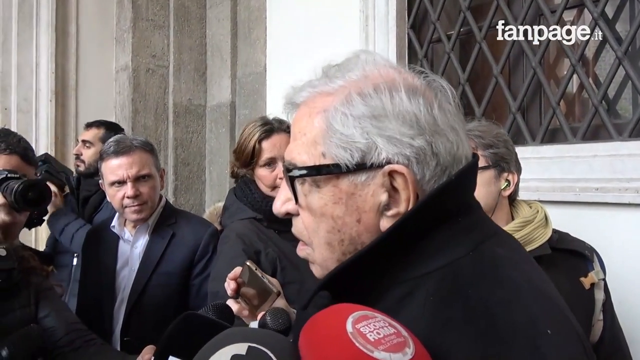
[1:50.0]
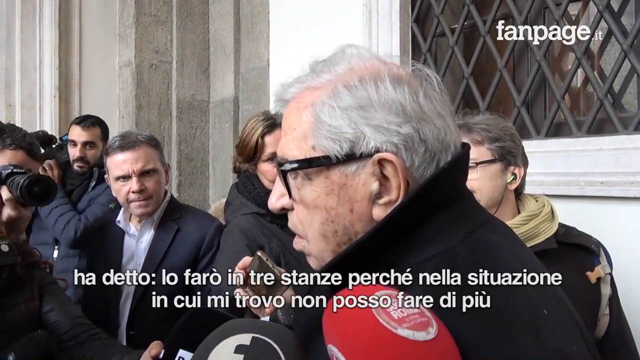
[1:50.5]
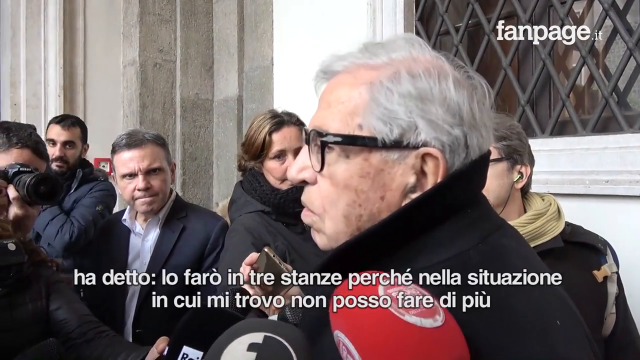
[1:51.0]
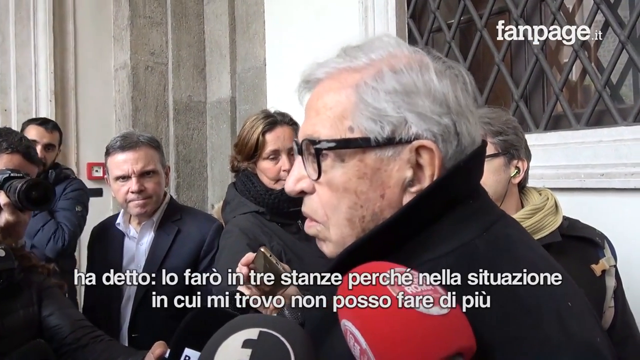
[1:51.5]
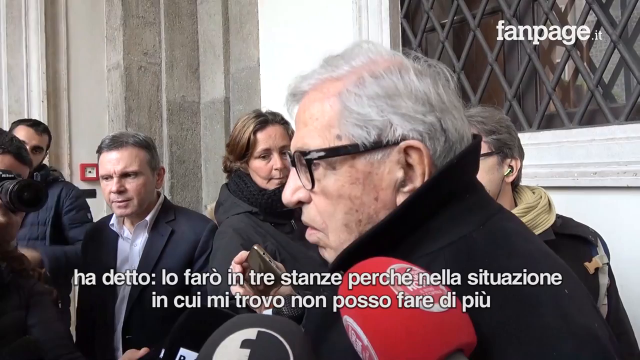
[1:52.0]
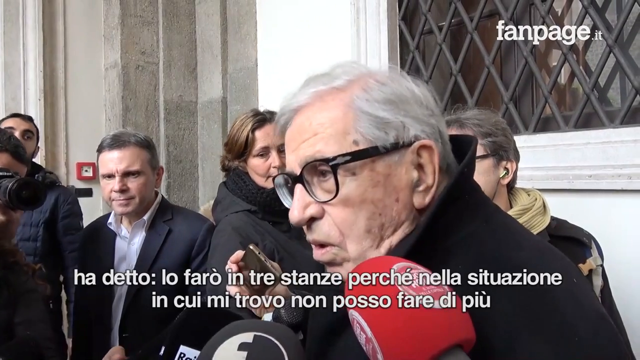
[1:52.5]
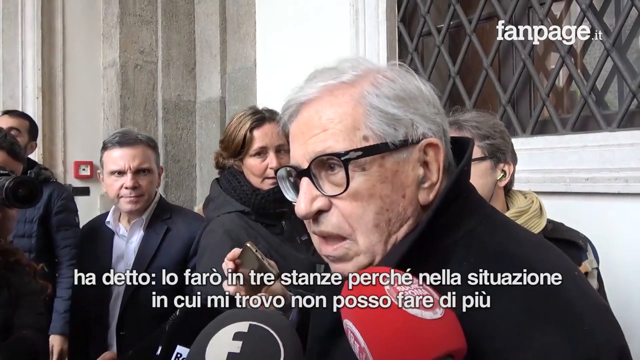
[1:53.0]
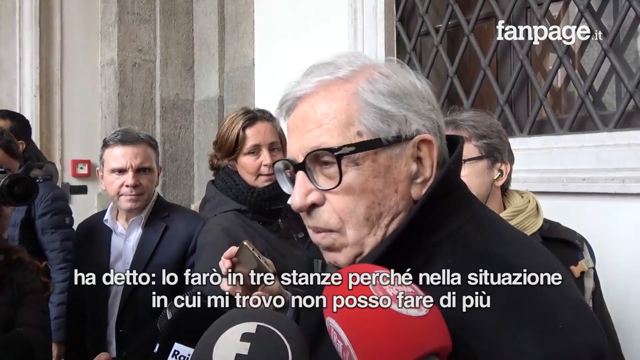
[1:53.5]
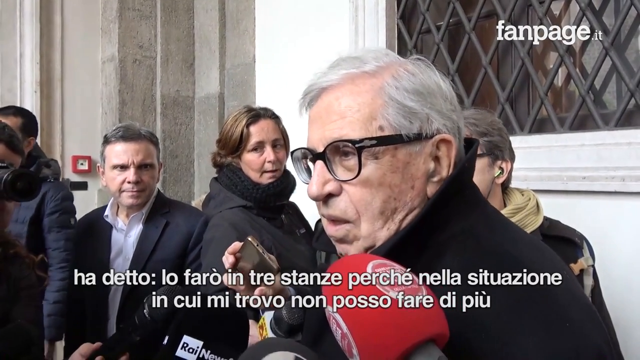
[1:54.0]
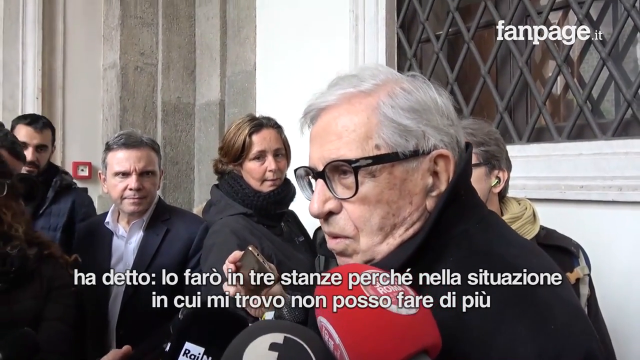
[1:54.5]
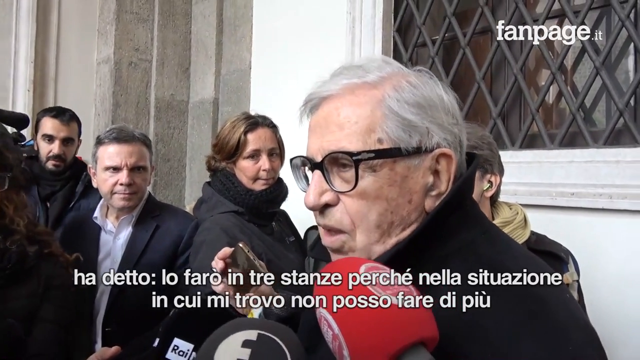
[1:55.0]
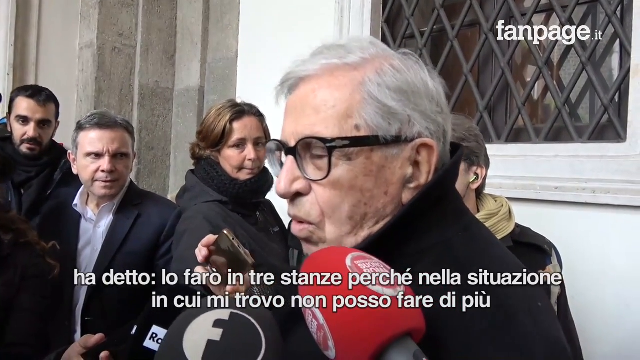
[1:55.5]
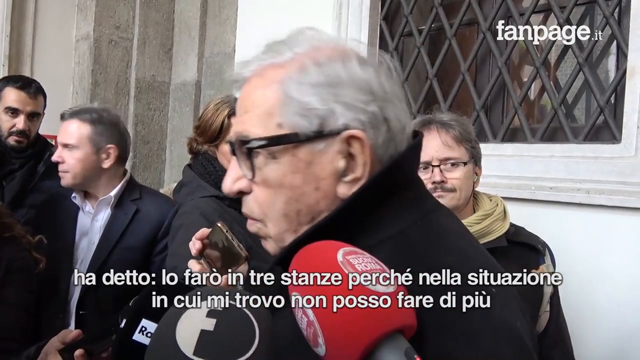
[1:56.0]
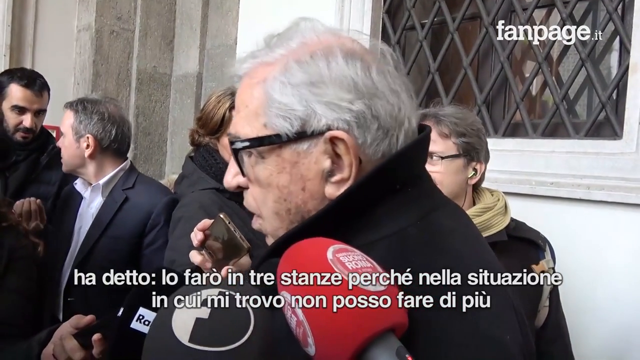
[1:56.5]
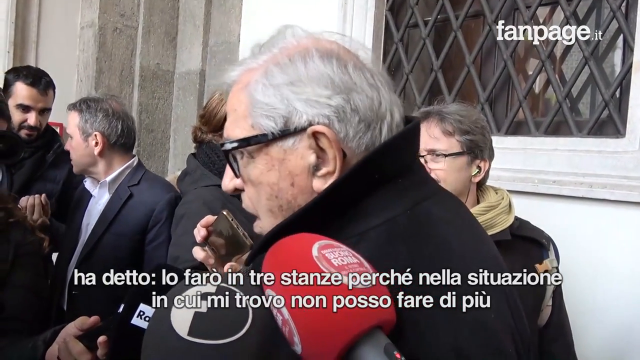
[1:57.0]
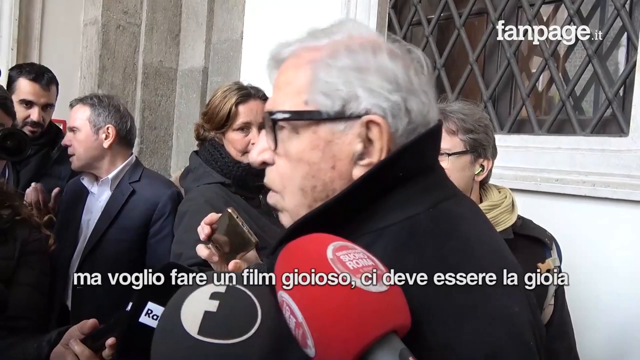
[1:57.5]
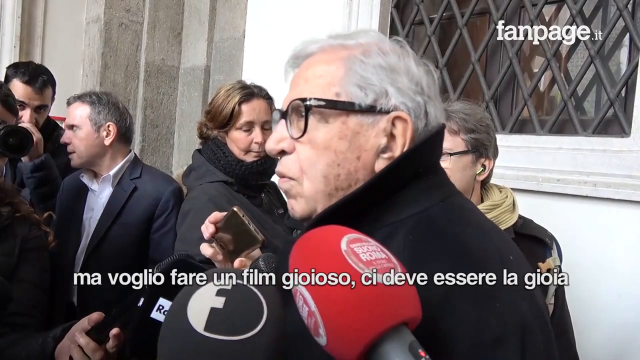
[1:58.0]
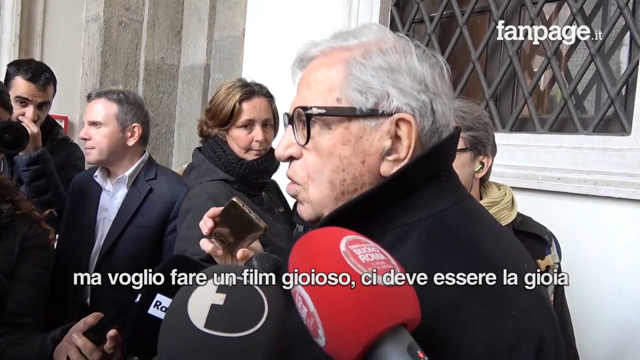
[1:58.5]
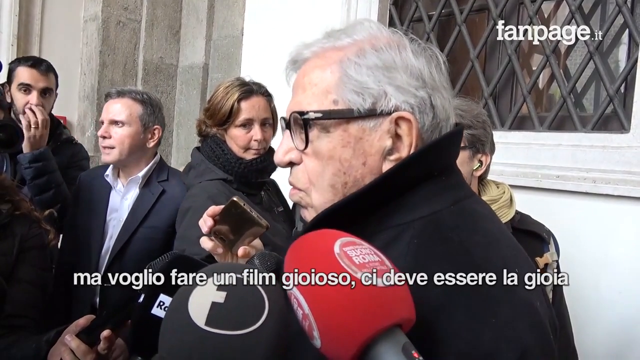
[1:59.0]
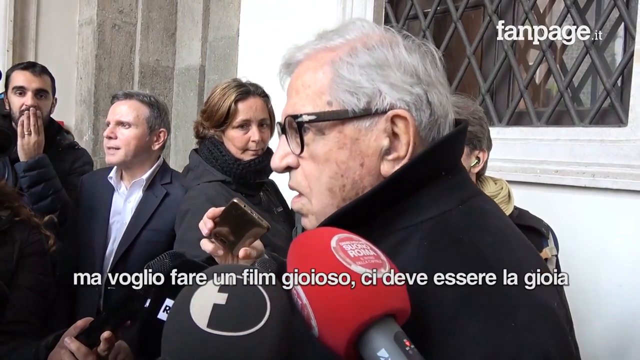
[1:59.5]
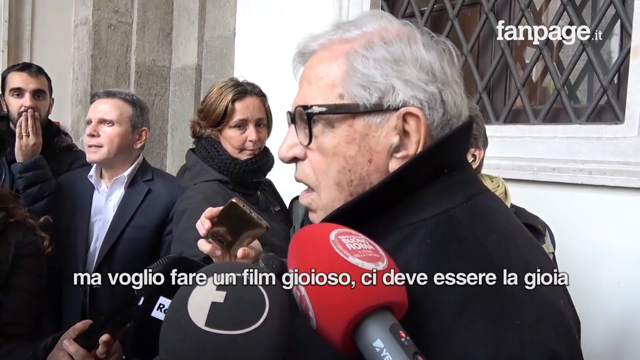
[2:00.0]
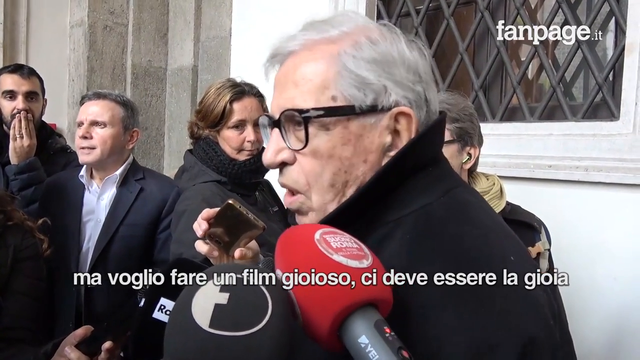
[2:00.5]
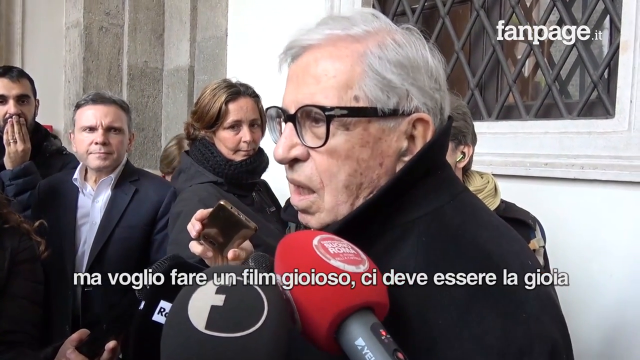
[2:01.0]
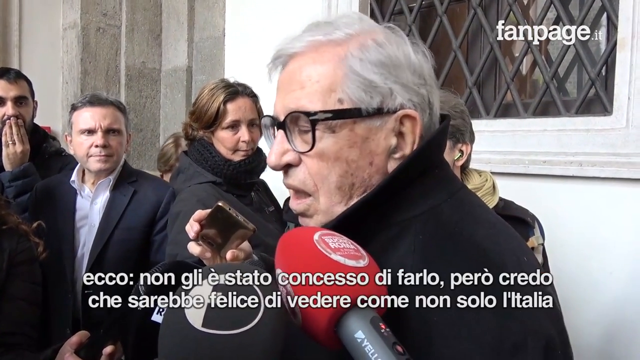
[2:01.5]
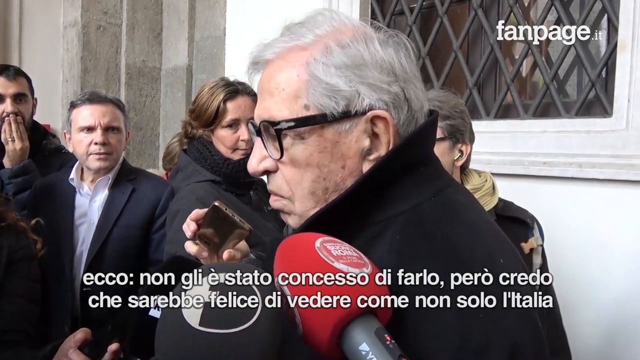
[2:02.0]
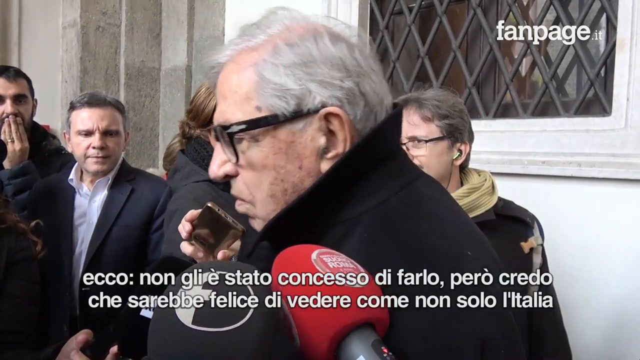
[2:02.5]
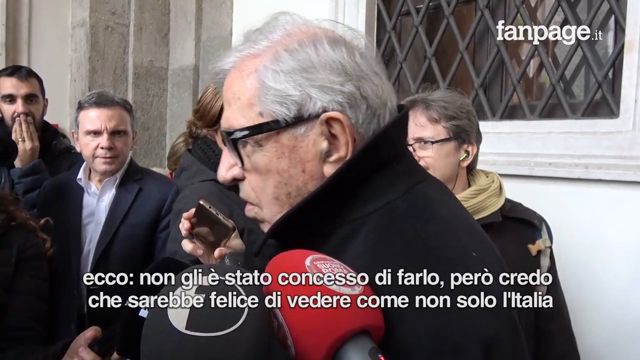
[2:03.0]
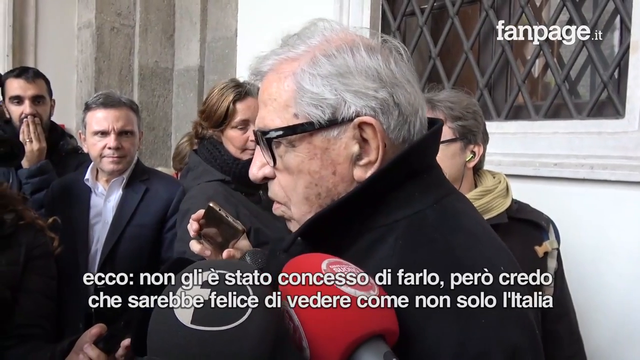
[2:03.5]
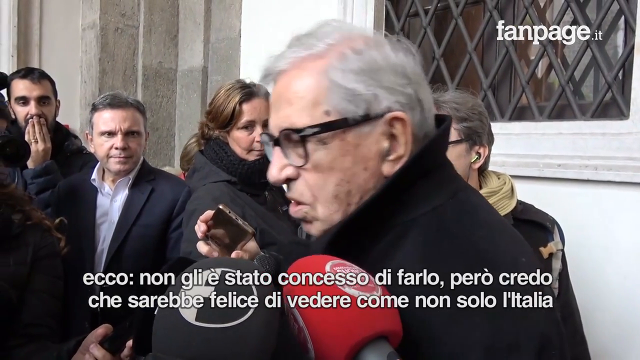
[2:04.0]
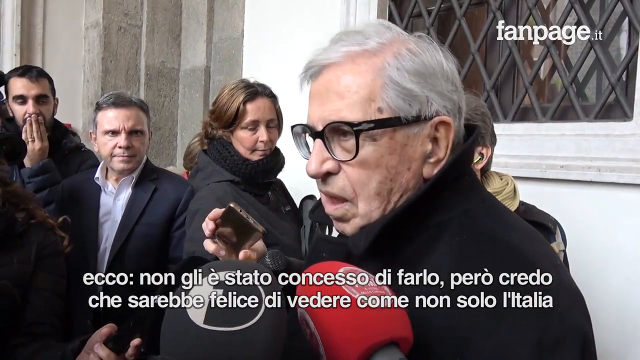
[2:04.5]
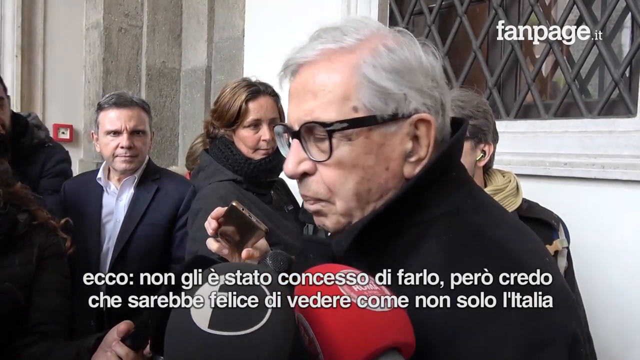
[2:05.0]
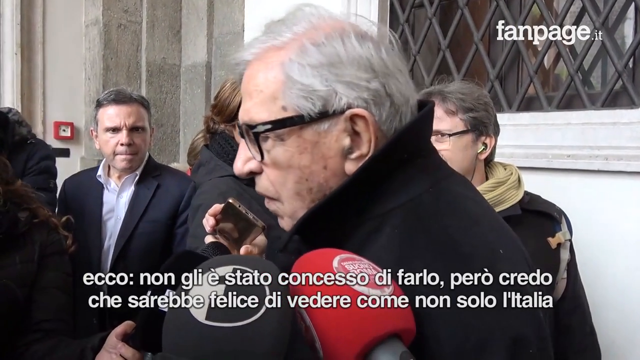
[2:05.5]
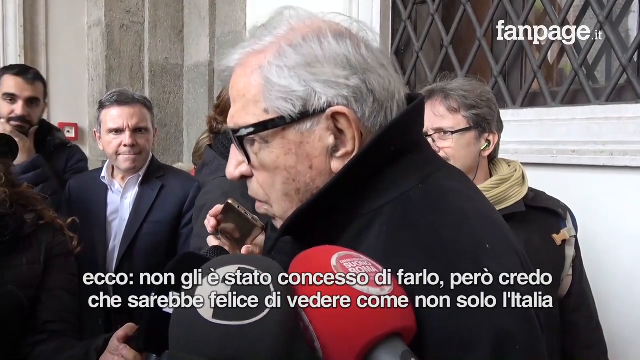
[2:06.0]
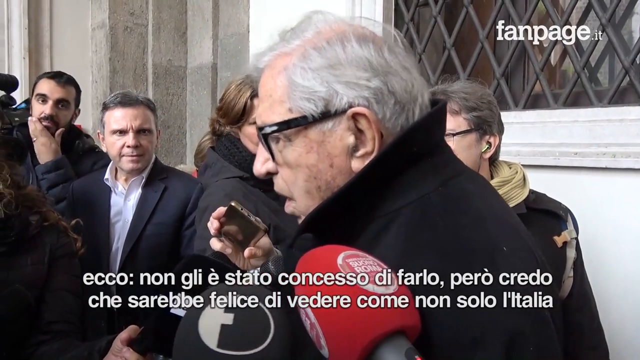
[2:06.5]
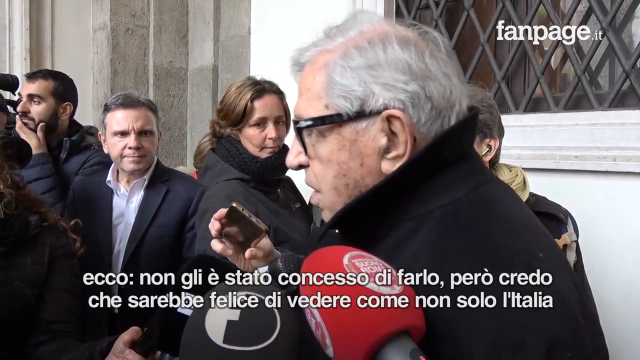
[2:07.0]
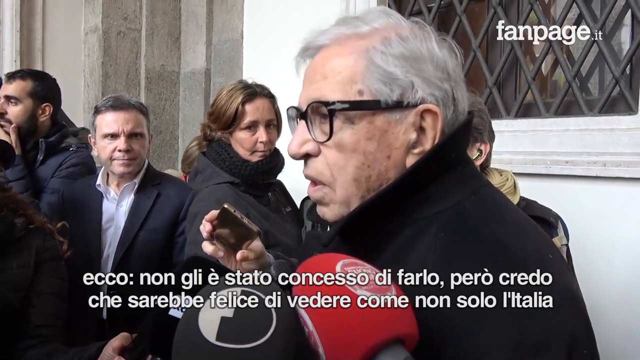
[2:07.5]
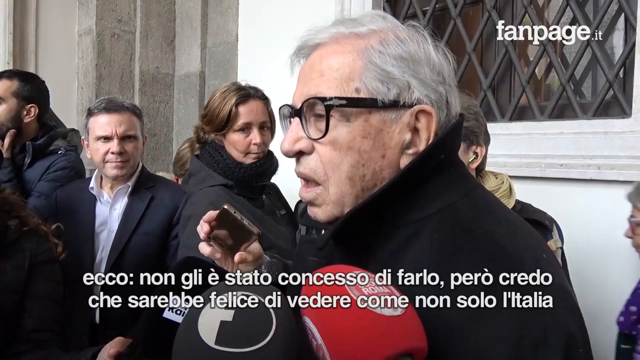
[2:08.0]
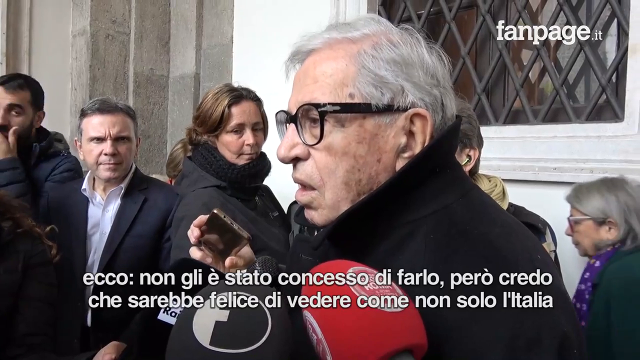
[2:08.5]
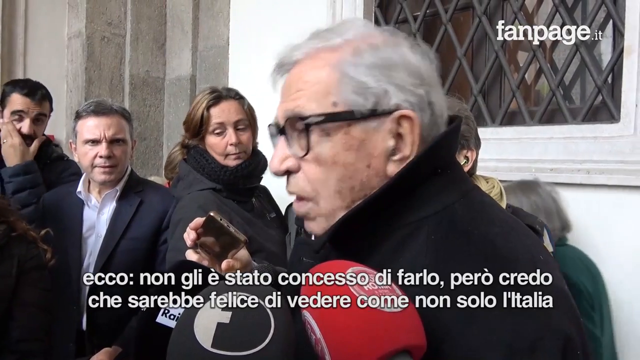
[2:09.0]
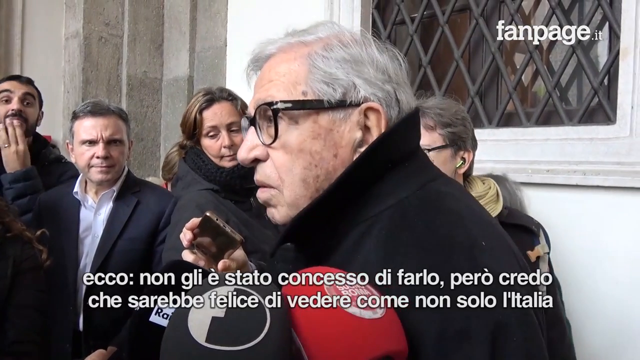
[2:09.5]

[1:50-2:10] The same man keeps a neutral expression. He fidgets, looks up, moves his head slightly side to side and moves his whole body, though he is not very expressive. Behind him, a woman with a black scarf around her neck records him with her cell phone, quietly waiting for him to finish. Next to her is a man in a blazer with a serious look who is not holding anything, no camera or microphone; he could be a guard or secret service. Another man behind the elderly gentleman has a light scarf around his neck and apparently holds a mic. They are all recording him.